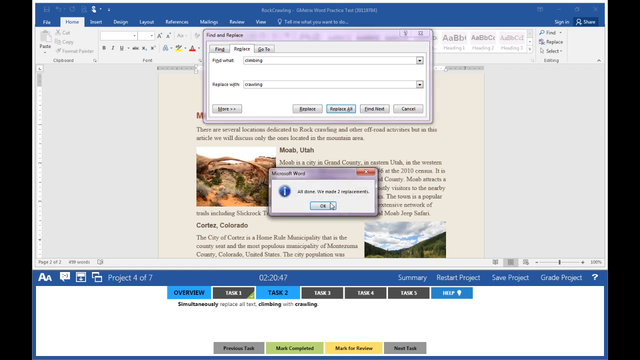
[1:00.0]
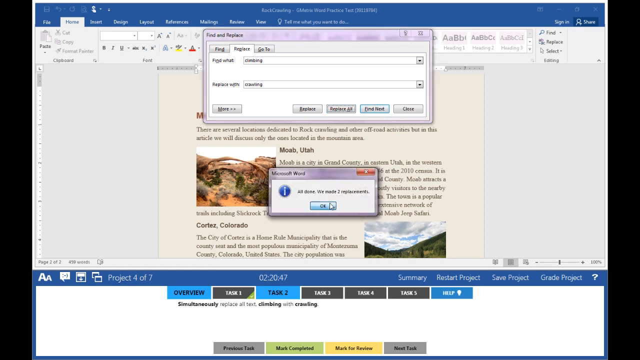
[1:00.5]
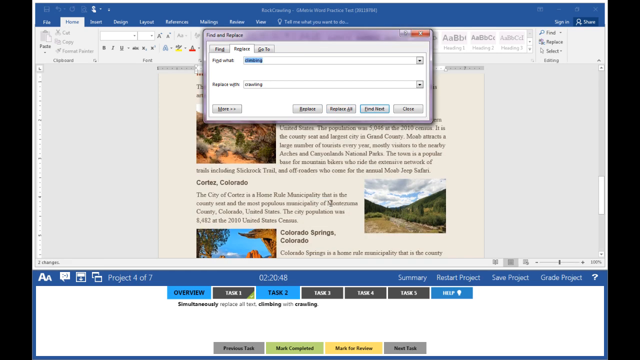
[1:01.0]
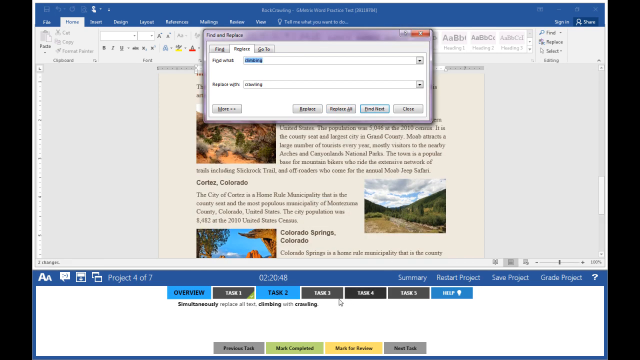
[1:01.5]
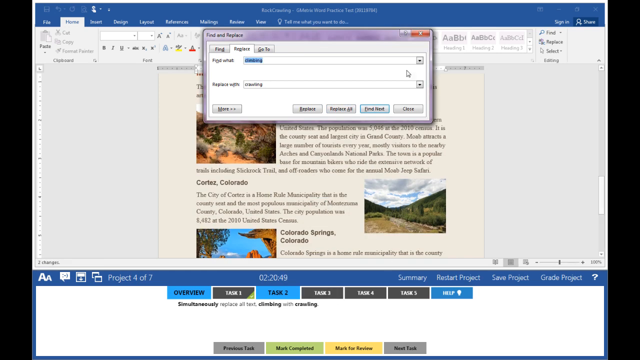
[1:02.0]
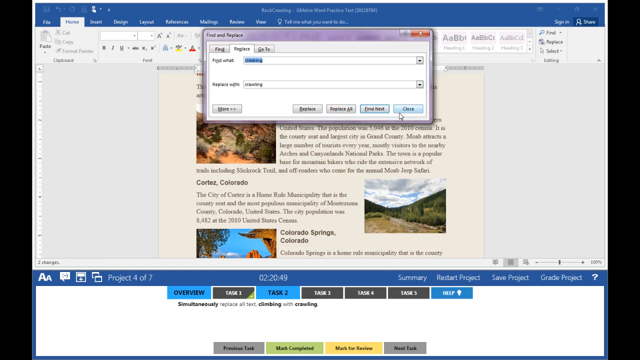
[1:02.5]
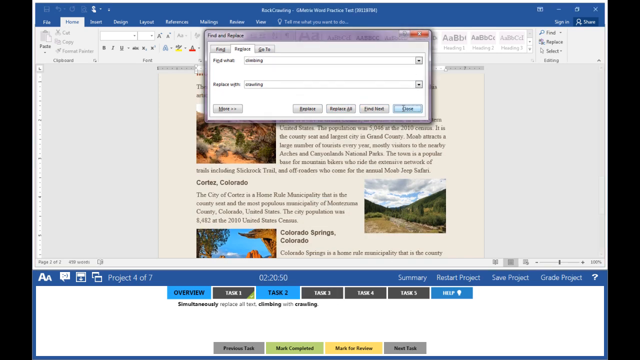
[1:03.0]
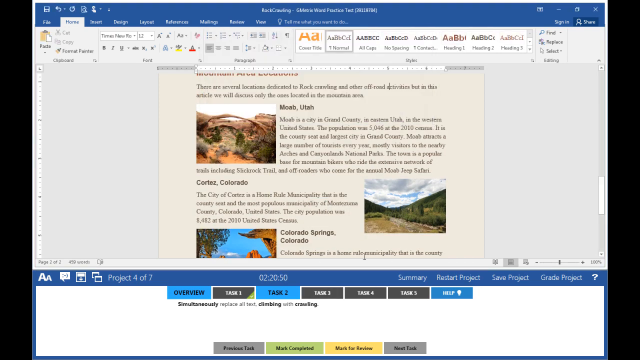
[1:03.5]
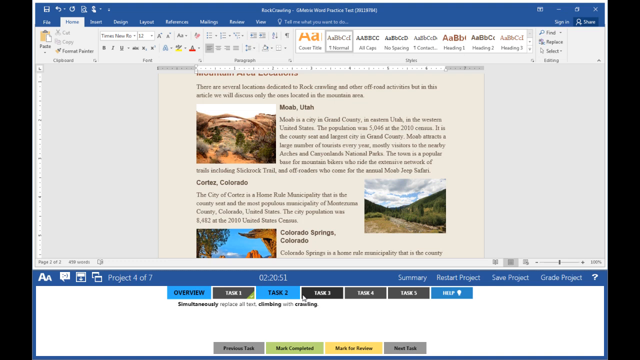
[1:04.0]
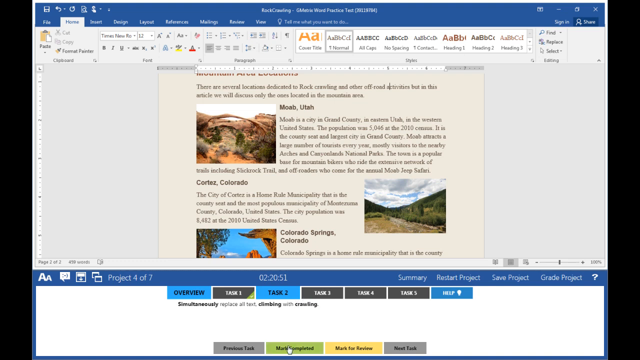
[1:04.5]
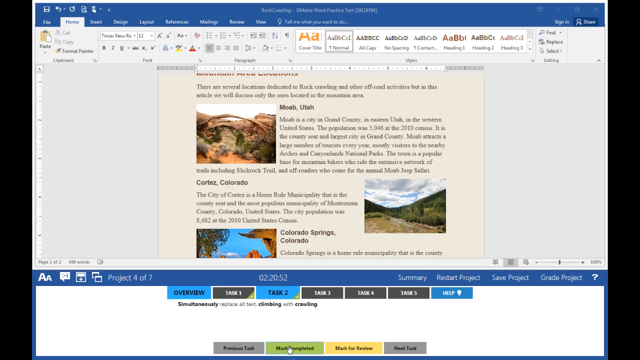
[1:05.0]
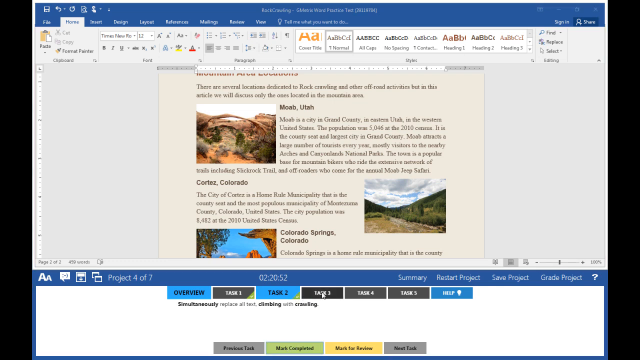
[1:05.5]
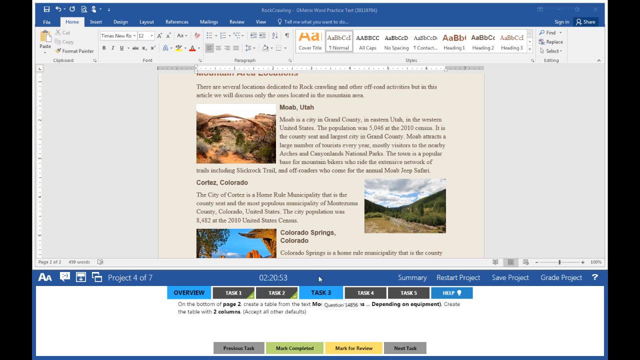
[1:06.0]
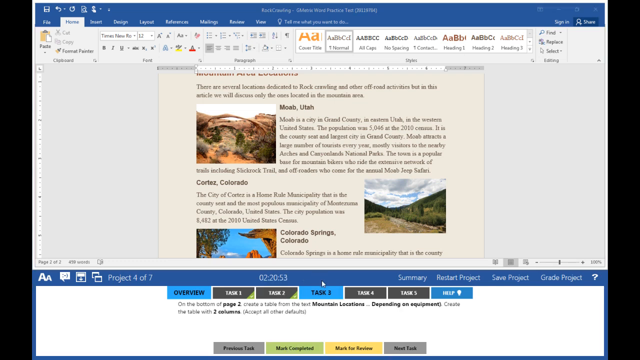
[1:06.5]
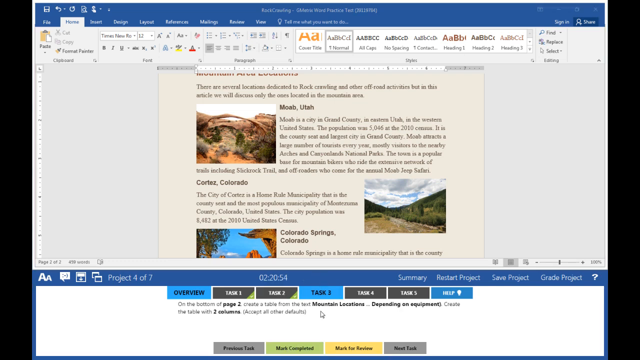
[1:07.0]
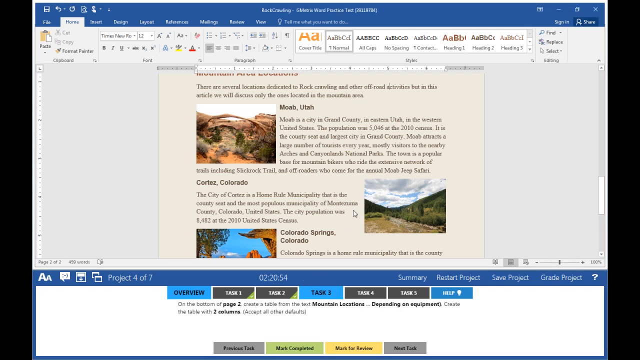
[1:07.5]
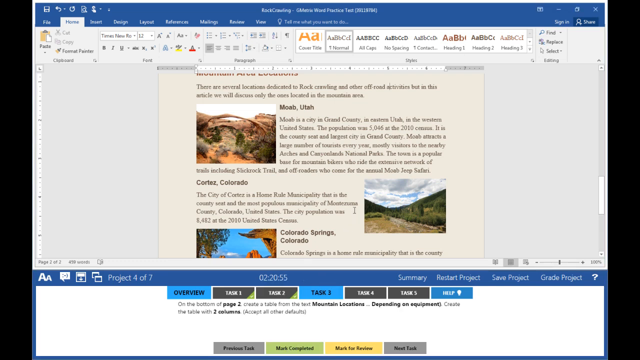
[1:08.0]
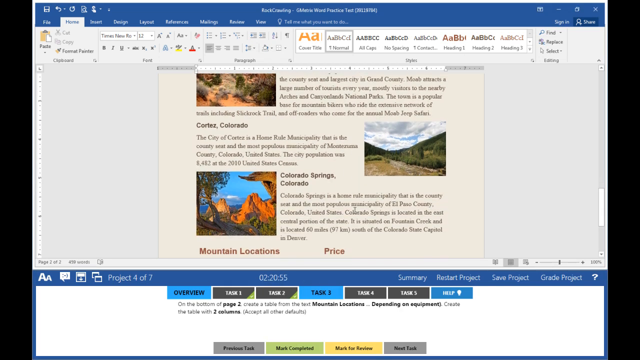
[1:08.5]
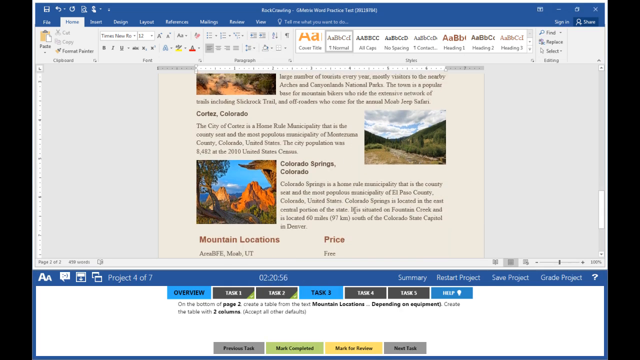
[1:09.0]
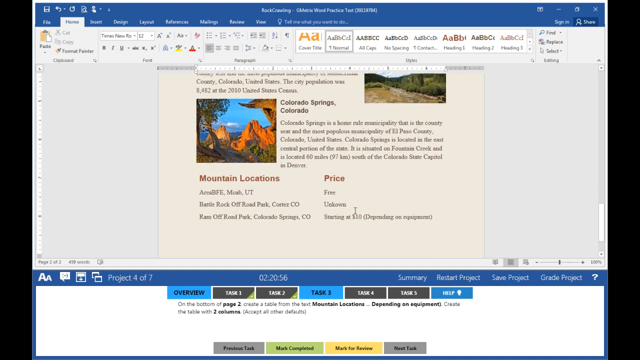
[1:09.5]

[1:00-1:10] On a Word document, the person is clicked on task 2 and is apparently replacing "climbing" with "crawling," though the replace word cannot really be made out. A pop-up says "Microsoft Word all done we've made two replacements," with an OK button to click, and task 2 is finished. There are five tasks in the series, shown under the document with "project 4 of 7."